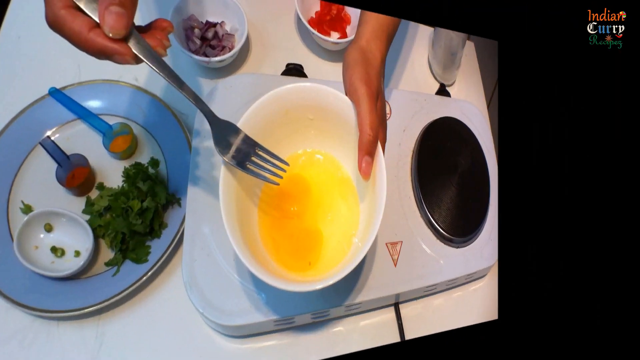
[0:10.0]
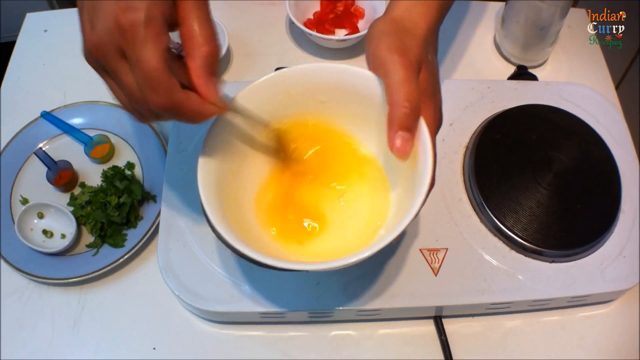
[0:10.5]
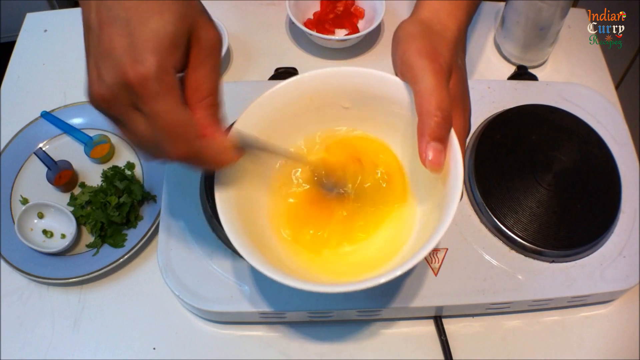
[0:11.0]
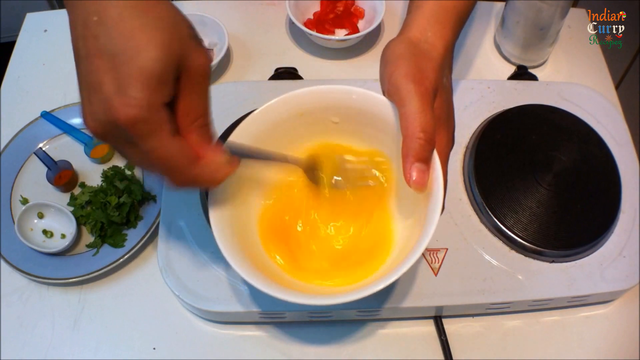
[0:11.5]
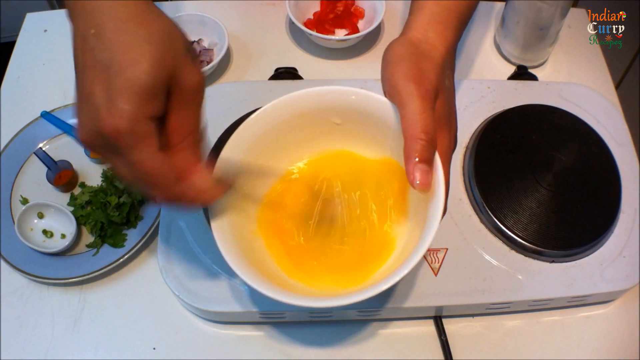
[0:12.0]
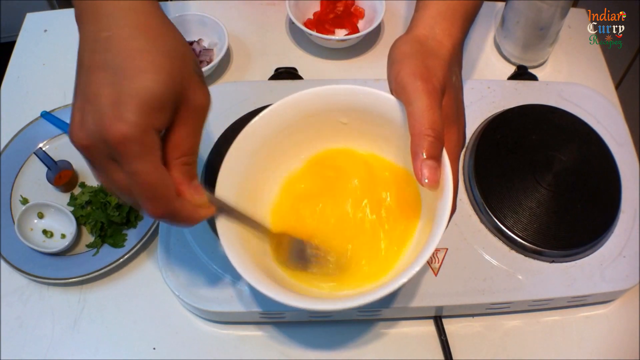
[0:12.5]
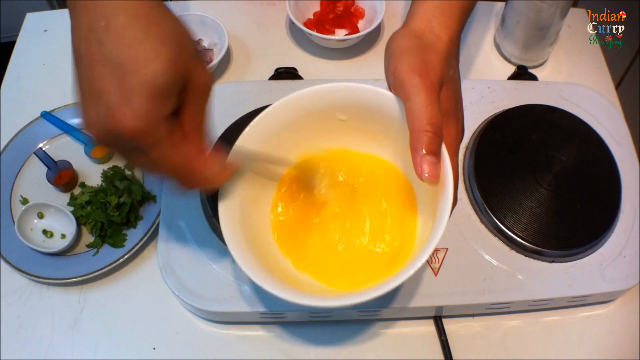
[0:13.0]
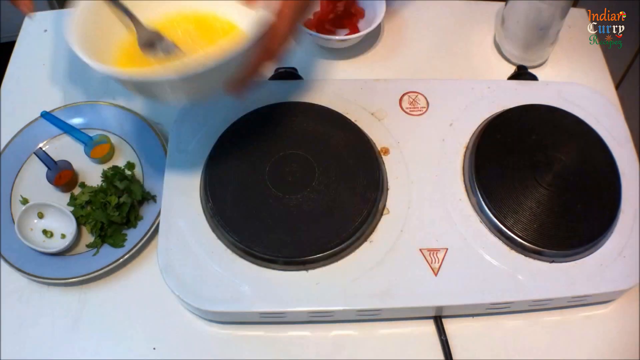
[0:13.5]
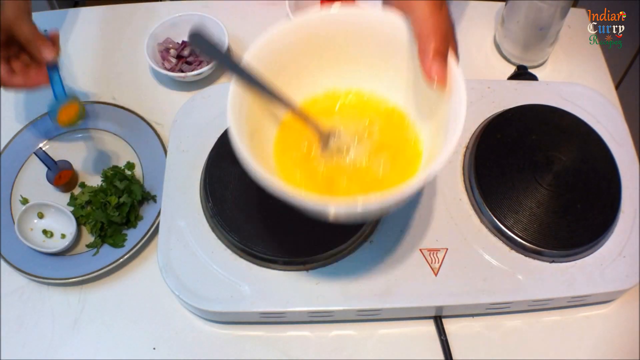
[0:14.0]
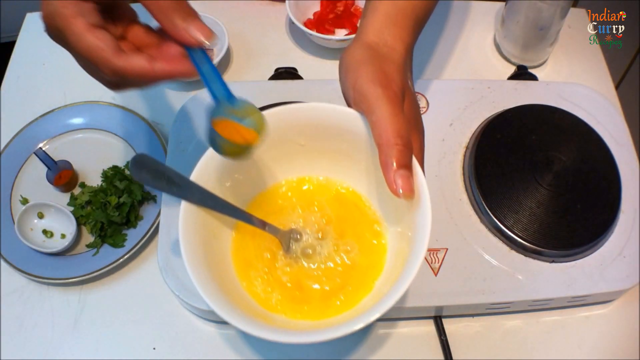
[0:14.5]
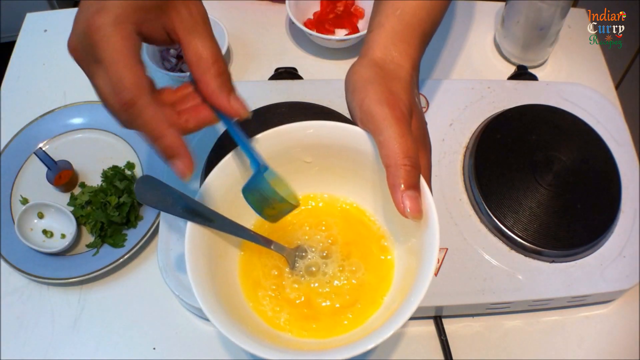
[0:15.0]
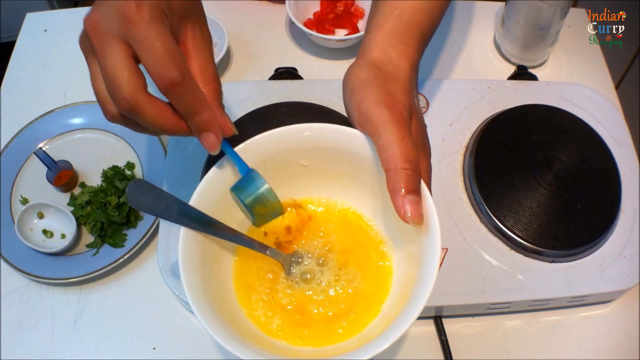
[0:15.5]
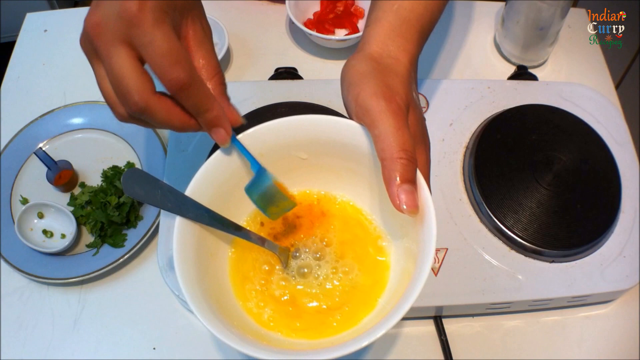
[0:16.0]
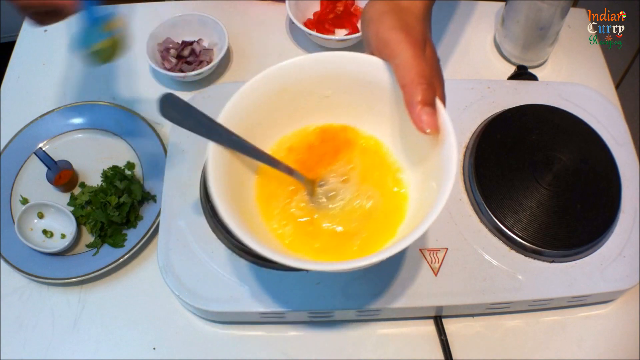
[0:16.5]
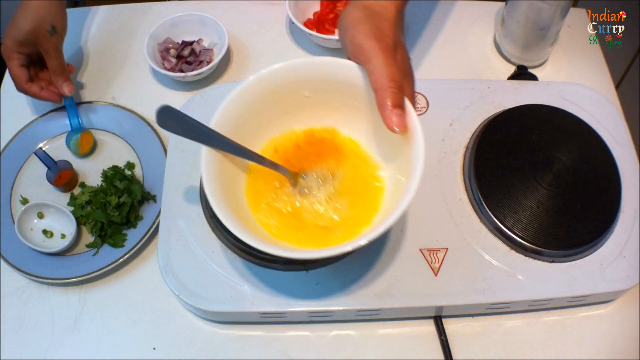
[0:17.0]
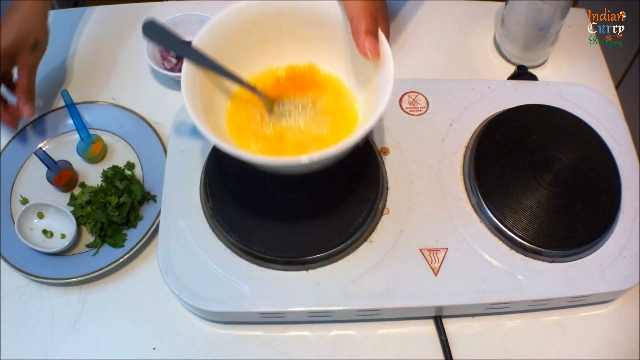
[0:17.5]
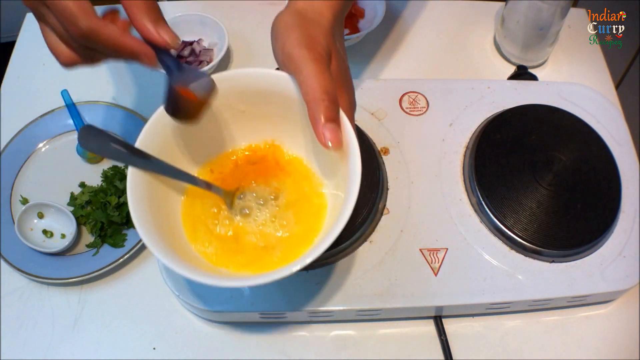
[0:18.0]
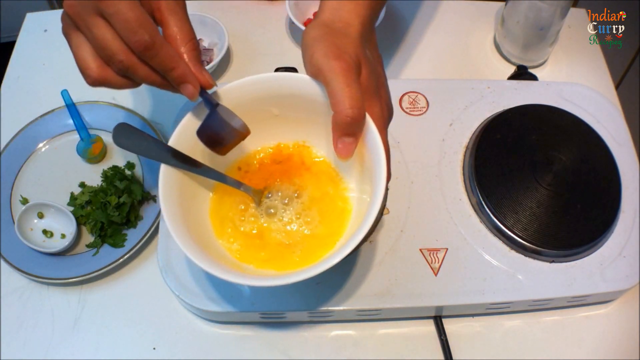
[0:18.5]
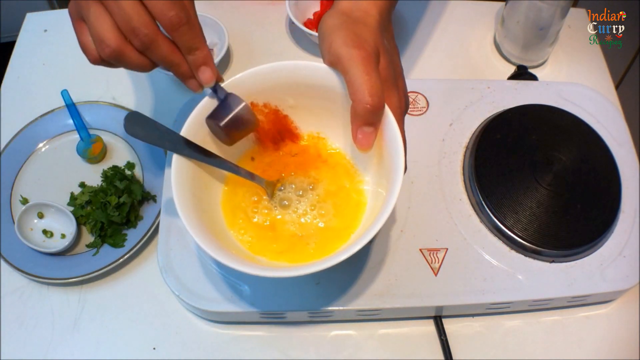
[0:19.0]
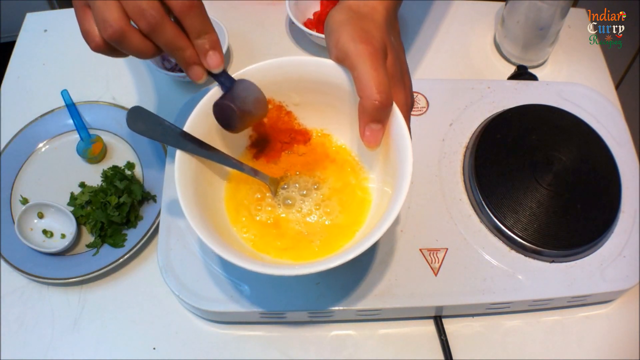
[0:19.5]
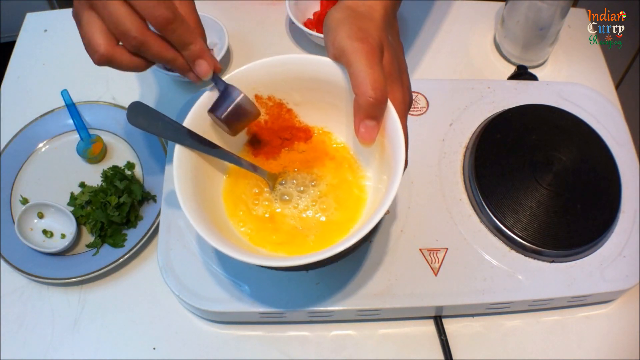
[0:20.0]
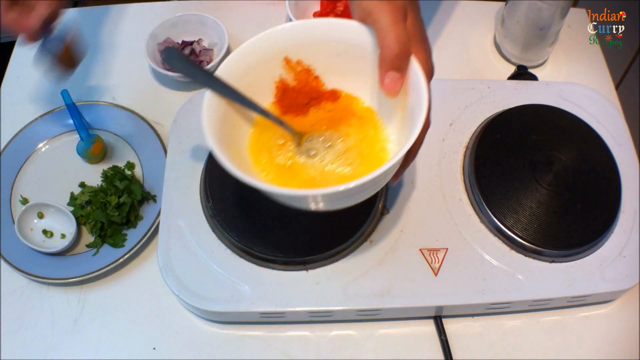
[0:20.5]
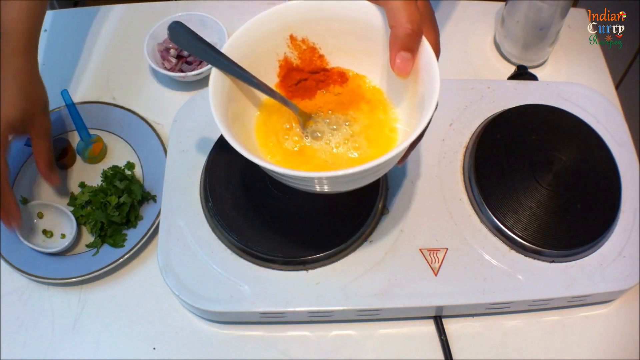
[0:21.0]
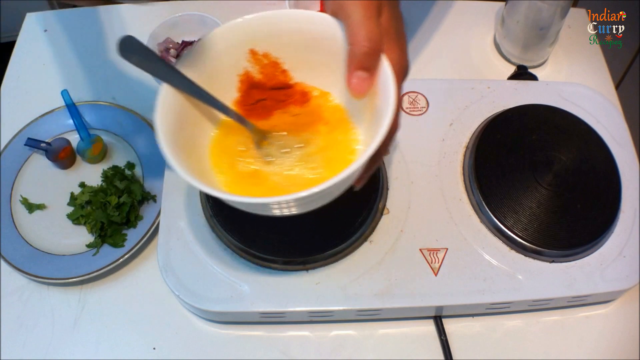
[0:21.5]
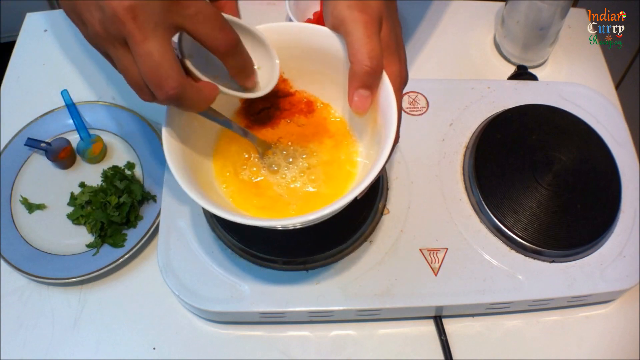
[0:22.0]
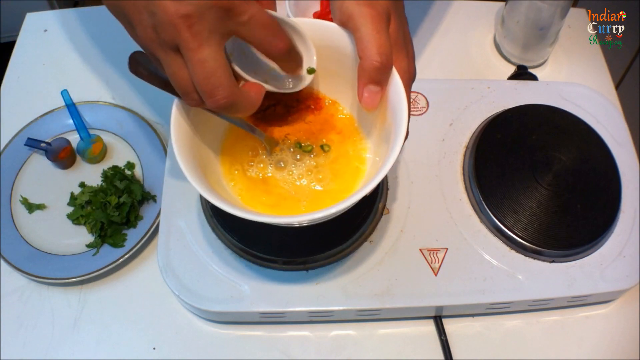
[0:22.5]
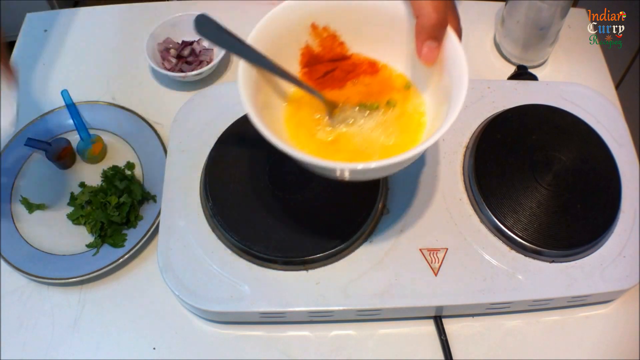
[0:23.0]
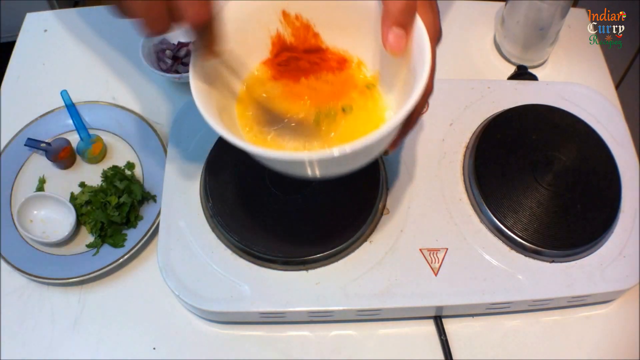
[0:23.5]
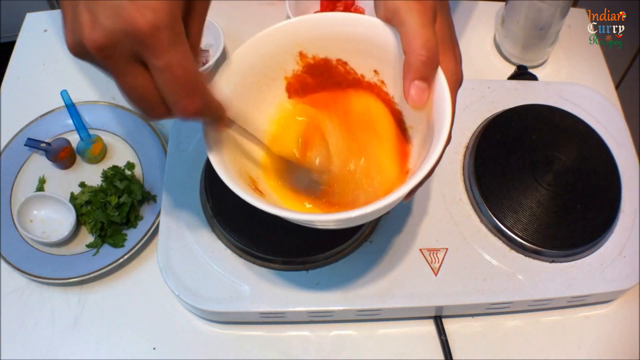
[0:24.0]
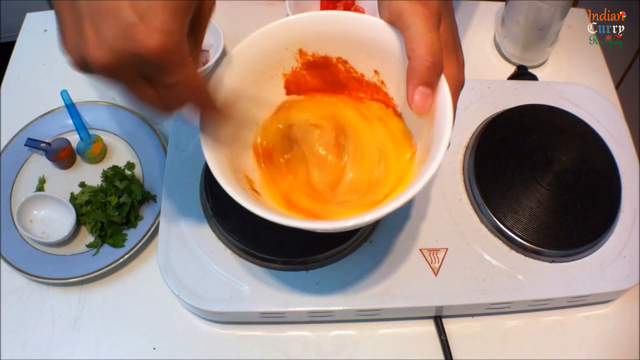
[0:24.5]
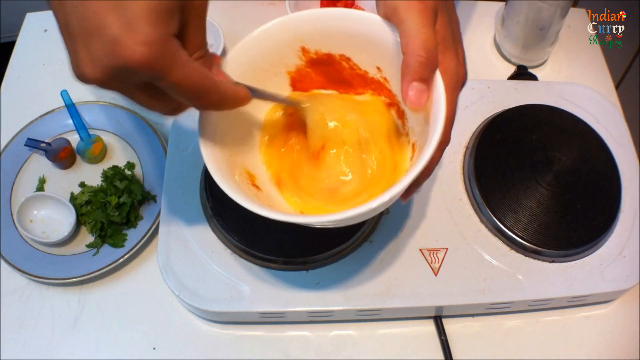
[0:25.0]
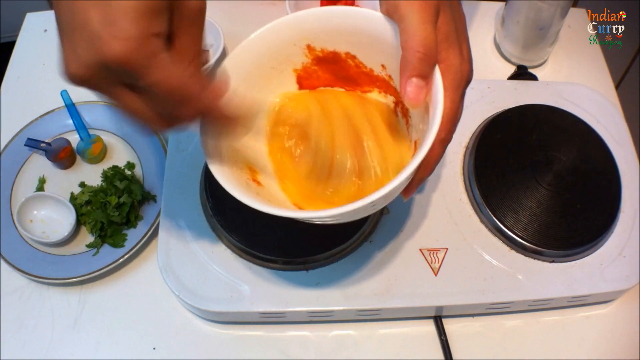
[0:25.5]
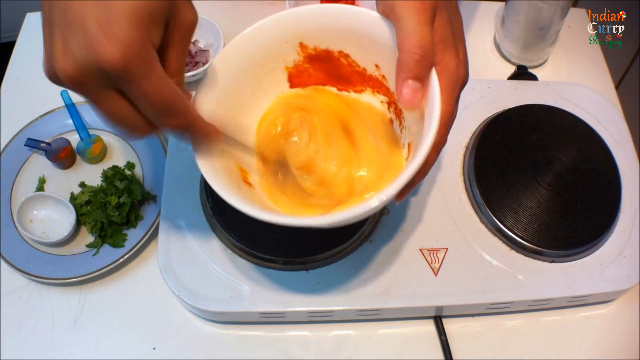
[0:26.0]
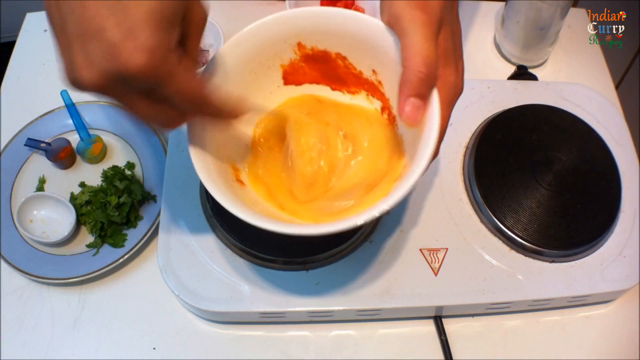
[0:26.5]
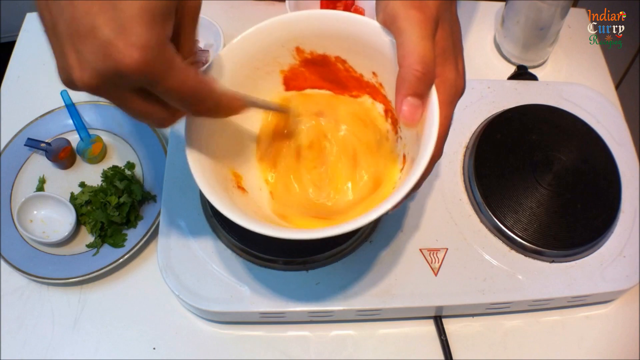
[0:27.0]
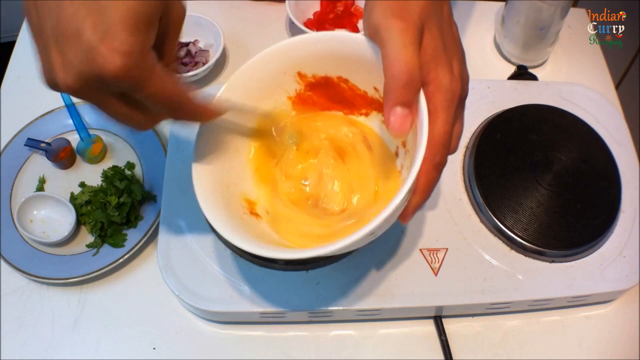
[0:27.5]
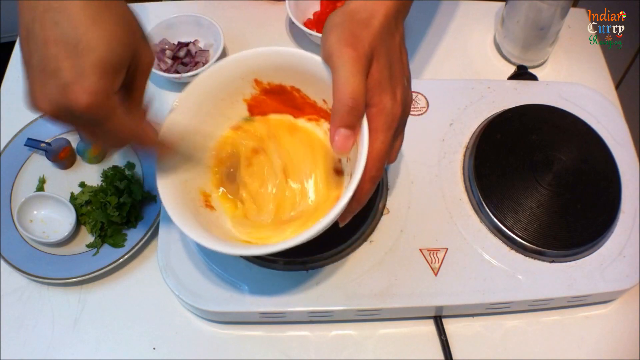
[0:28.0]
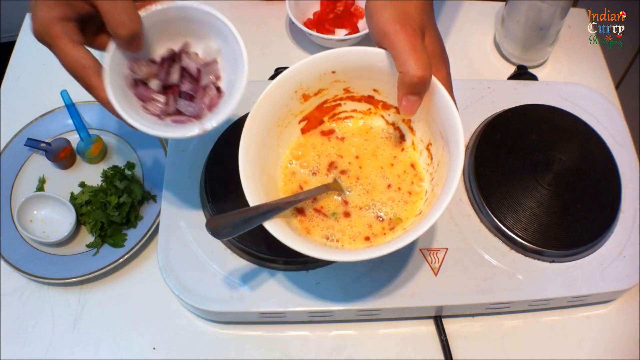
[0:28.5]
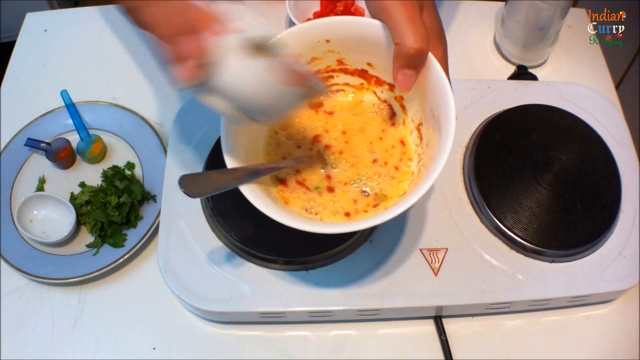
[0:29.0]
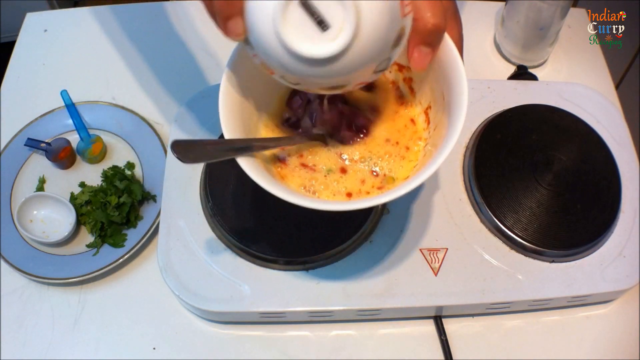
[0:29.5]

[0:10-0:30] A pair of hands holds a white bowl with egg yolk inside over a portable stovetop, which is white with two black parts where a bowl or pot would go to cook. Everything is on a white table, where a blue plate holds some sort of green leaves, two measuring spoons and a small white bowl. Behind that are two other small white bowls with some sort of ingredients in them. The hands stir the egg yolk very rapidly. After a little stirring, they begin adding ingredients: first they put one measuring spoon into the bowl, then pour in the contents of the other measuring spoon, then pour in the small white bowl. They stir repeatedly, then pick up one of the bowls from behind and pour it in.